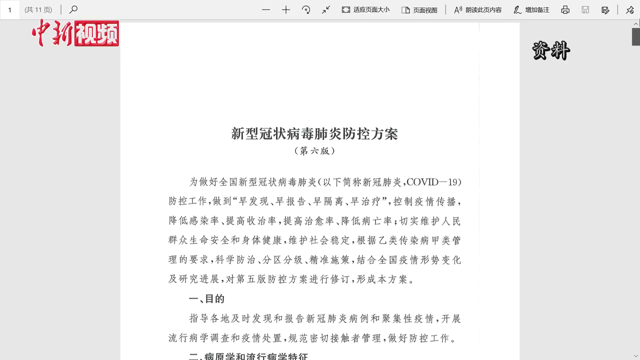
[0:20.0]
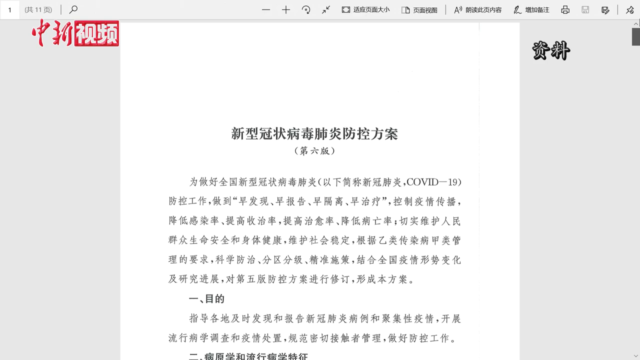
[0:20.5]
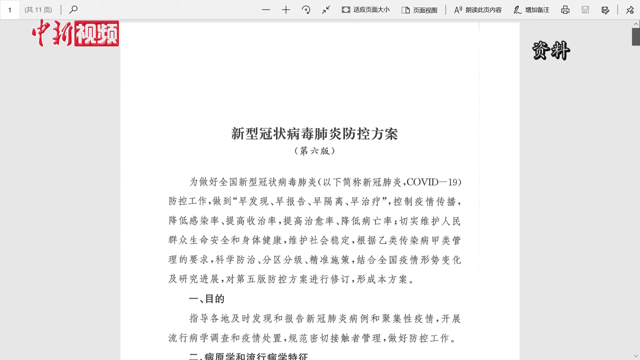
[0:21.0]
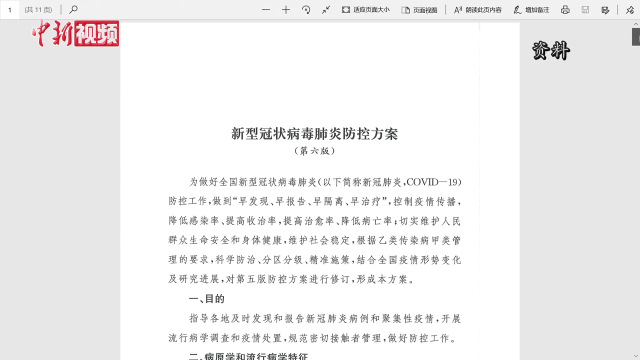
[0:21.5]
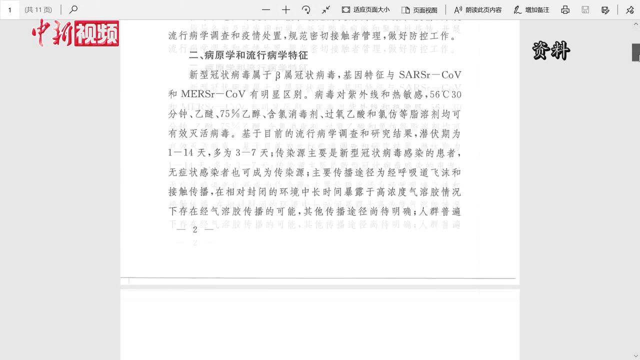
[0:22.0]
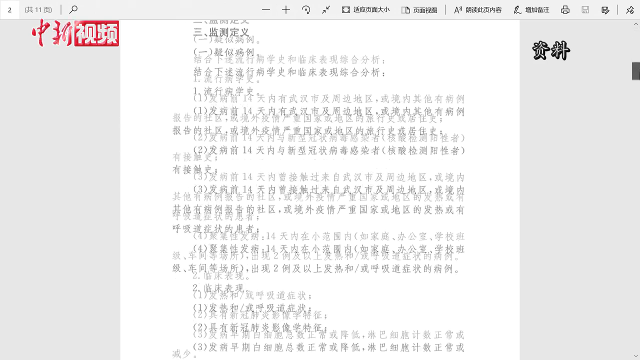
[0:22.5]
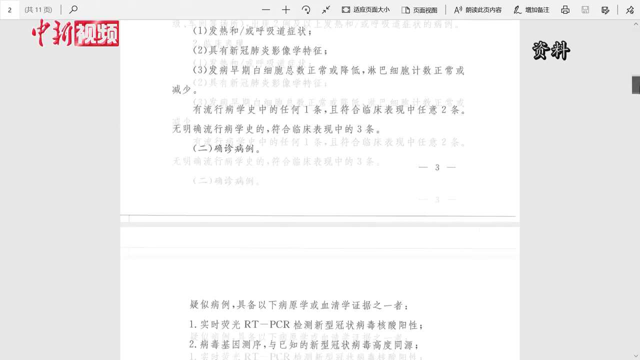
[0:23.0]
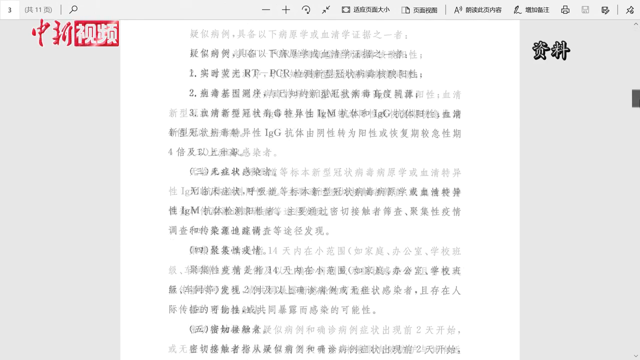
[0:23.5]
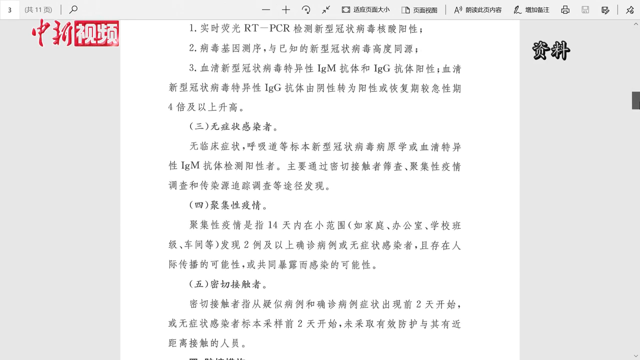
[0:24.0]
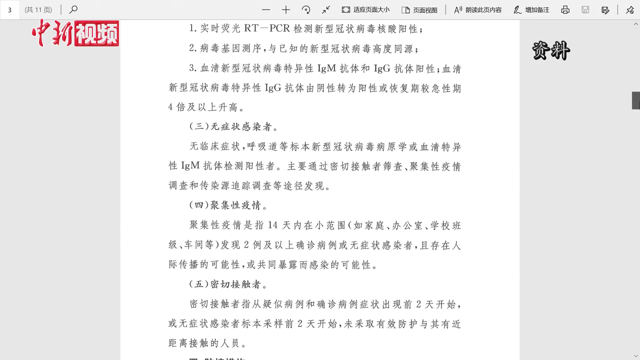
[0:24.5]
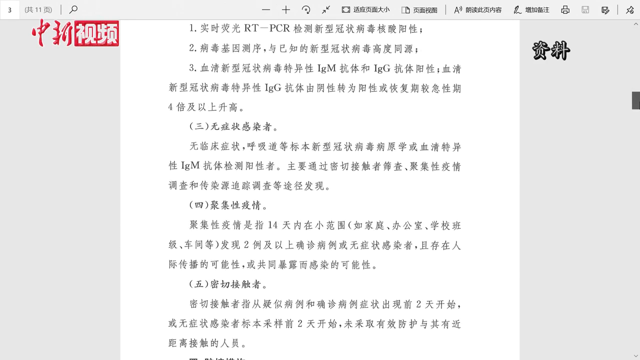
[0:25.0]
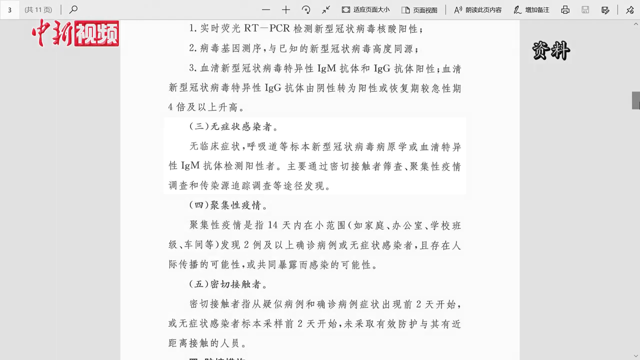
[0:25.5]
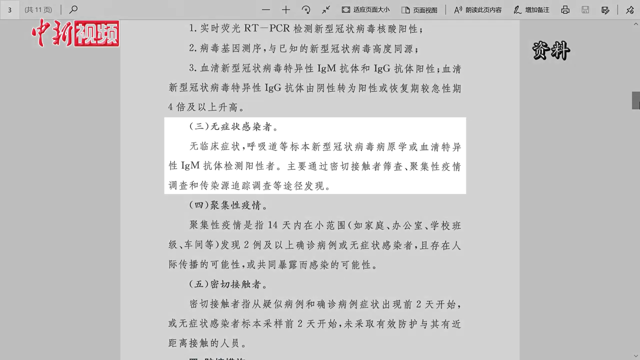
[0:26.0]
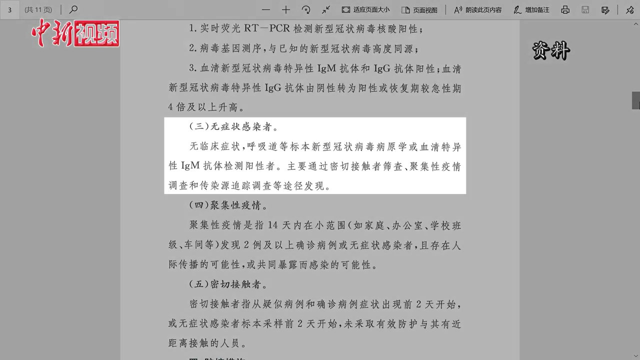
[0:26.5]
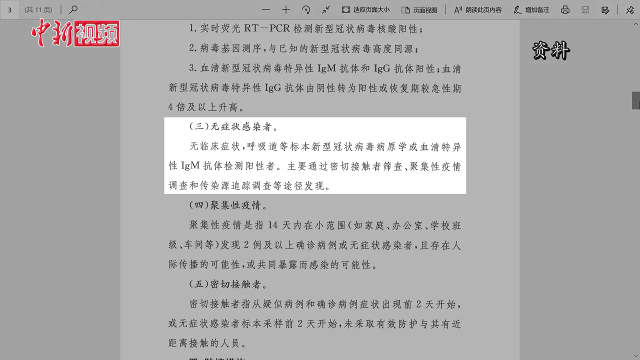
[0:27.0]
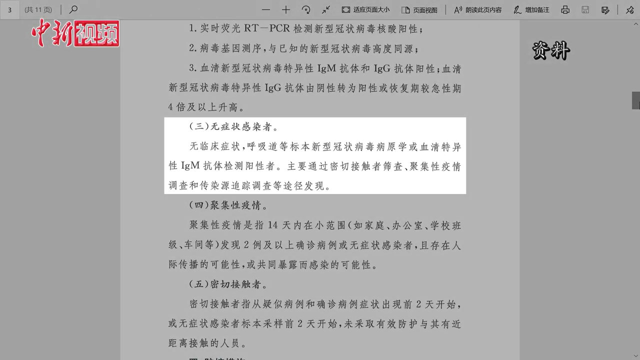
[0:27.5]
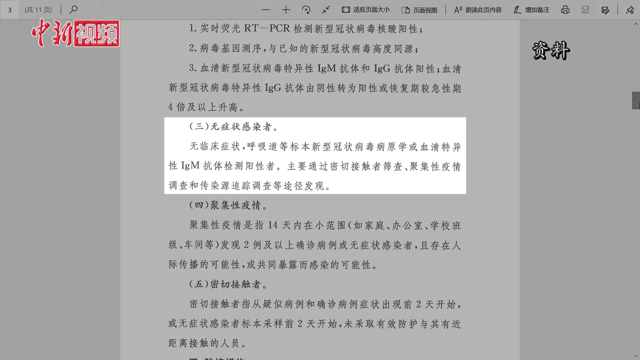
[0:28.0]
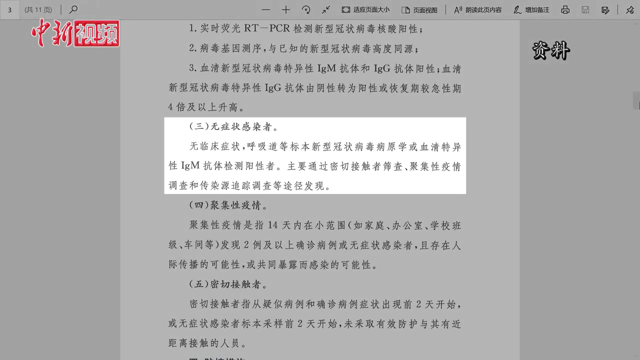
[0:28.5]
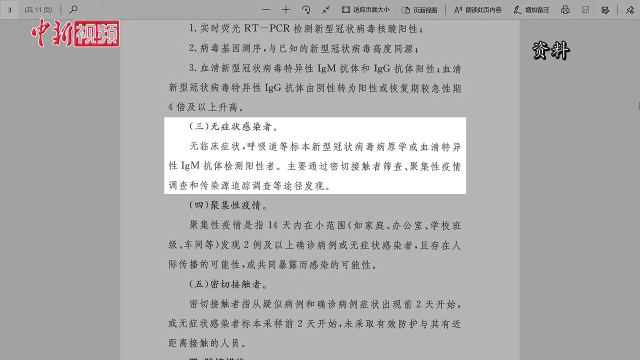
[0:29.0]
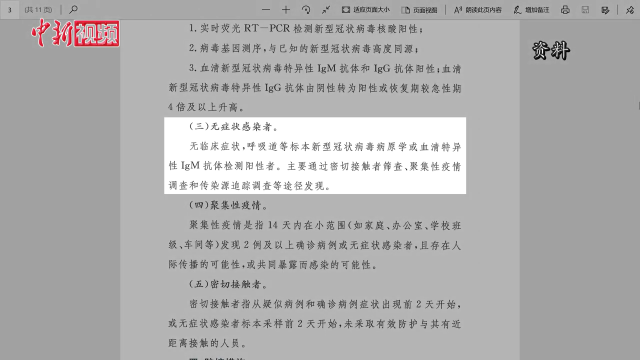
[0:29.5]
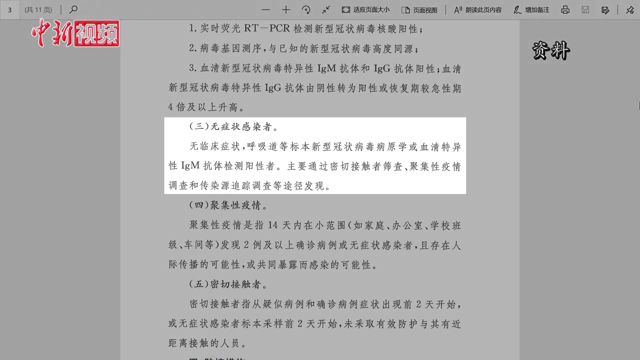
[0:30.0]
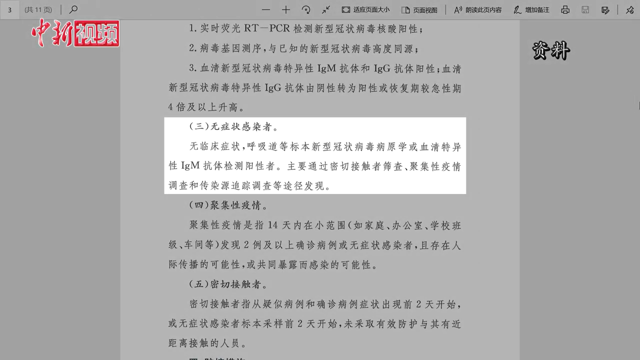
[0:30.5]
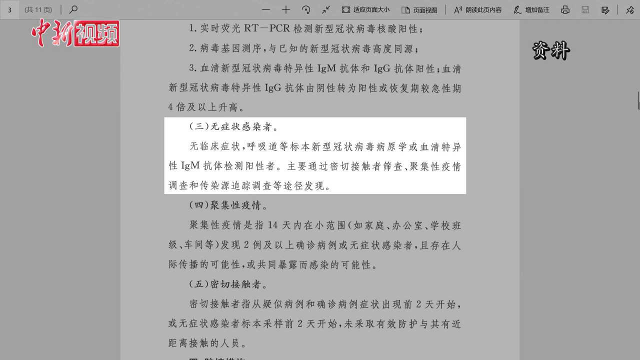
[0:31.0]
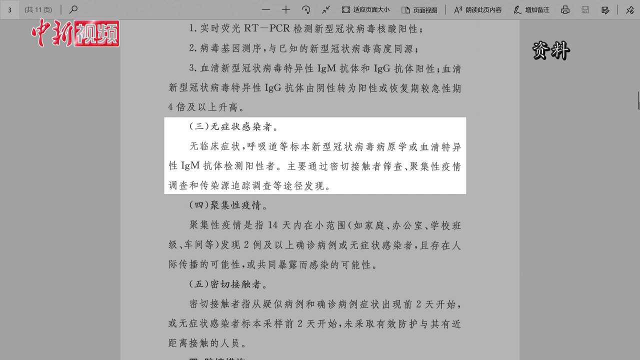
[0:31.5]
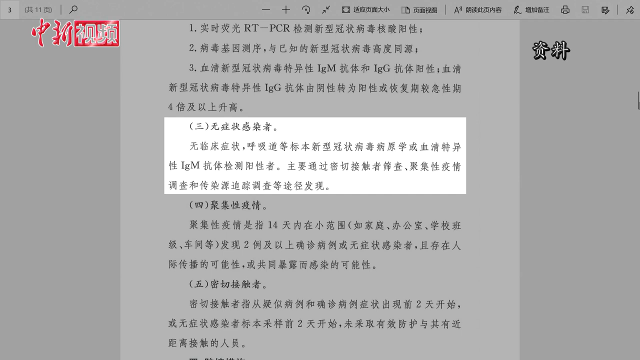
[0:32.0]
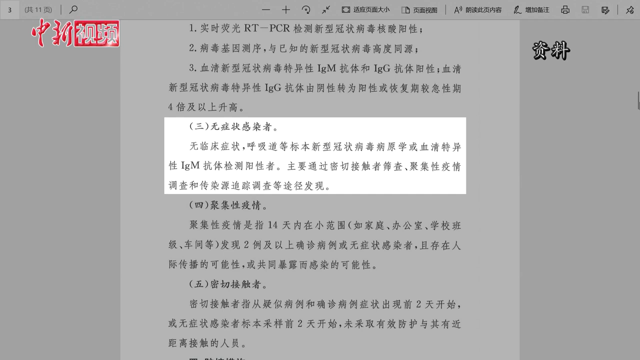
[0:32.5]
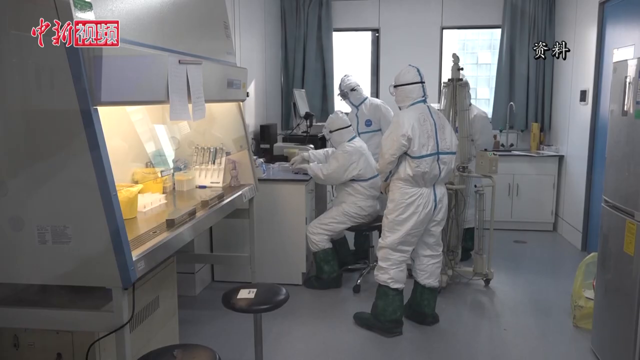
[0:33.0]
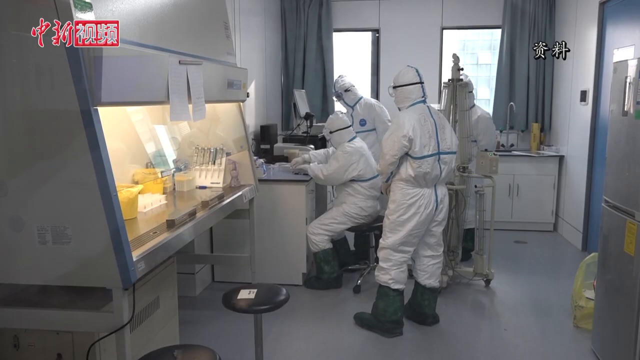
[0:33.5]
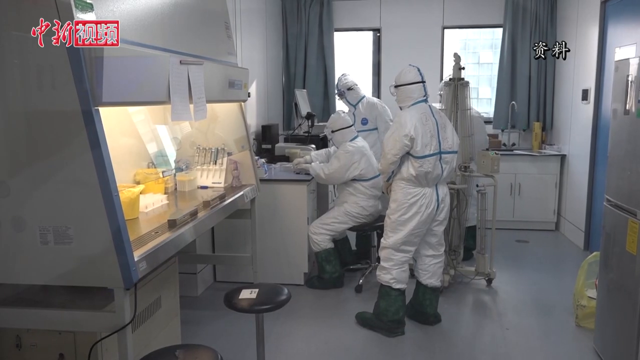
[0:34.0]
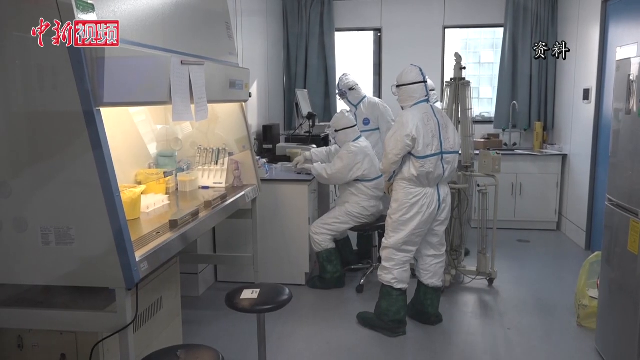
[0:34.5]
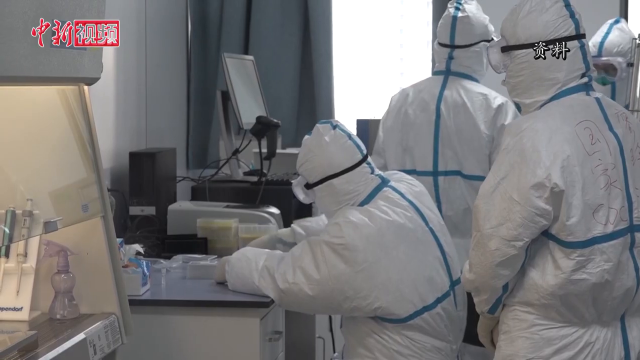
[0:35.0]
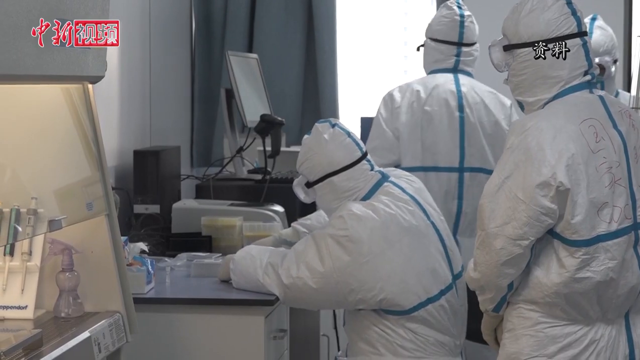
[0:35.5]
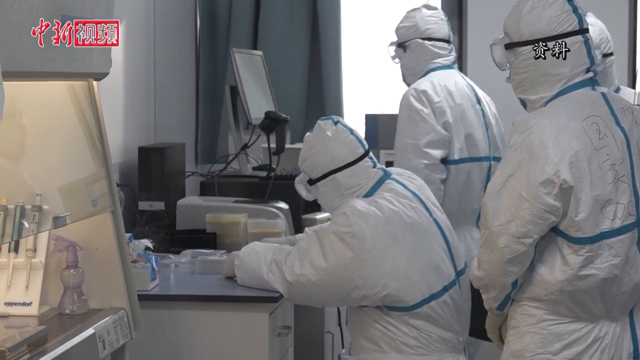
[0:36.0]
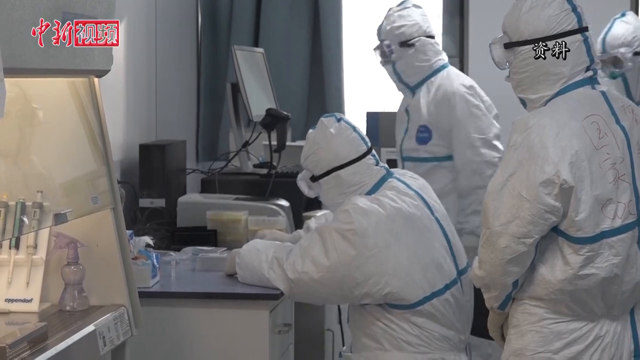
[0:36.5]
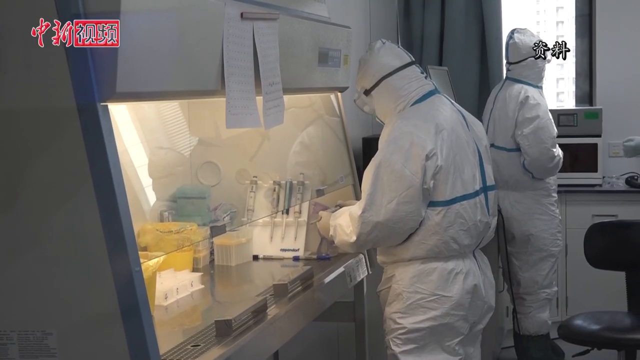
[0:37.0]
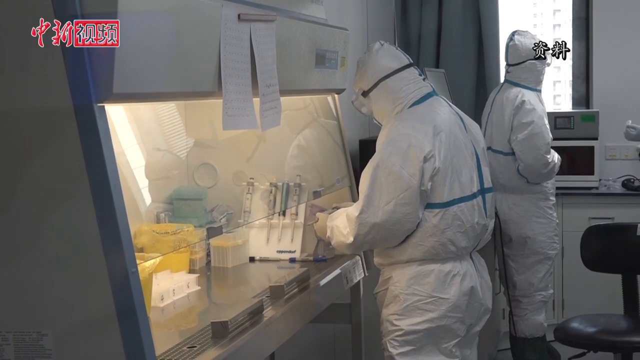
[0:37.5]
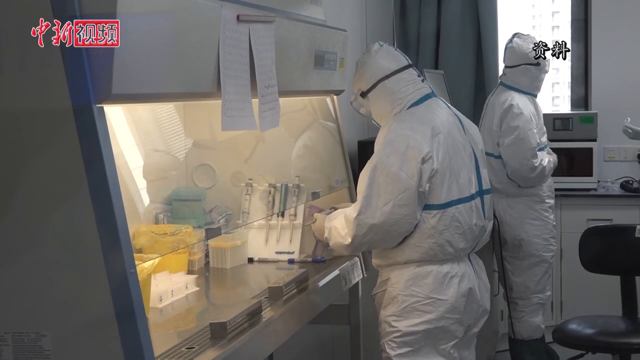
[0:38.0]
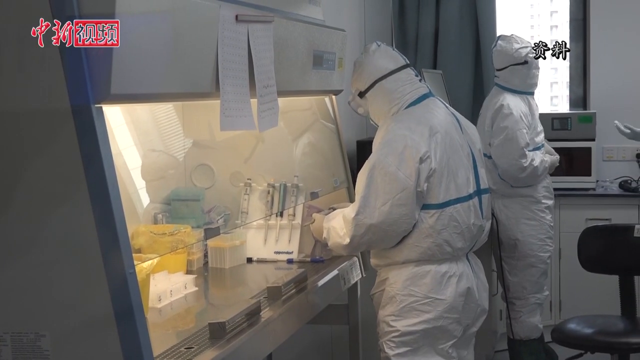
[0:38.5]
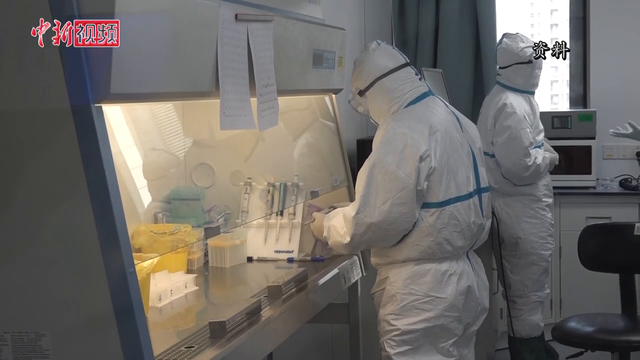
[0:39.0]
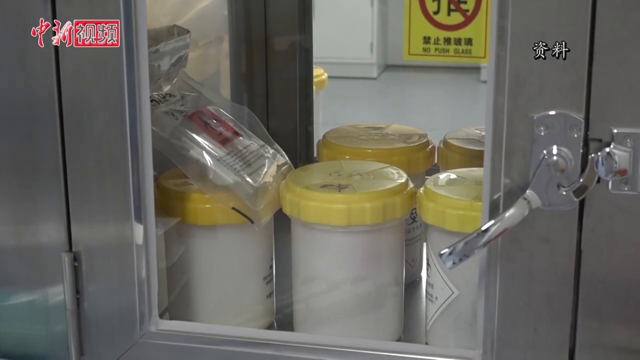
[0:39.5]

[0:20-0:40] The video switches to what looks like a Word document viewed on a computer screen, apparently a screen capture of a computer with the document pulled up. The person making the video scrolls down to what looks like number four and highlights that paragraph, dimming everything else behind it. A group of men in big hazmat suits then works in a lab, and the video cuts to containers with yellow lids locked in a case, apparently what the men in the suits were working with.